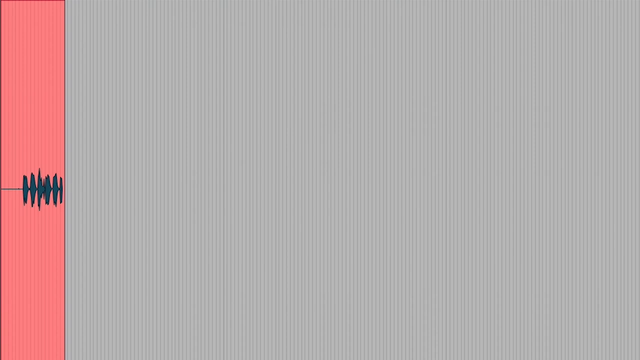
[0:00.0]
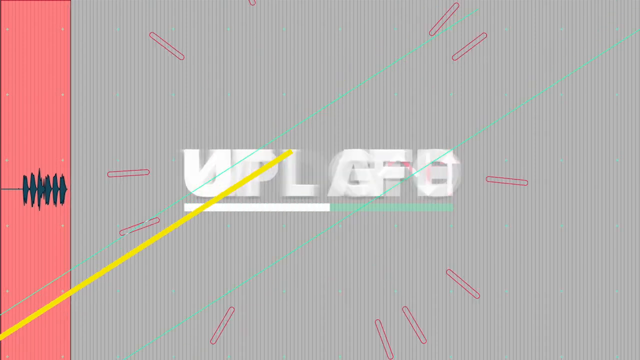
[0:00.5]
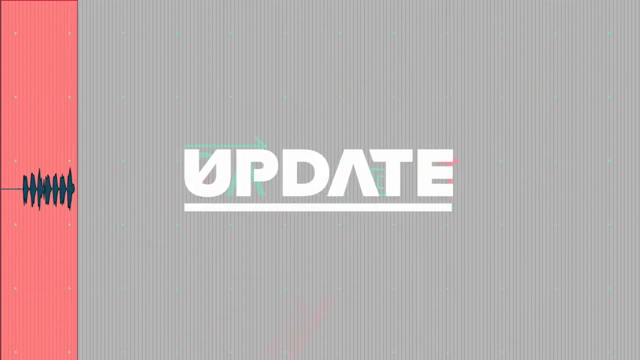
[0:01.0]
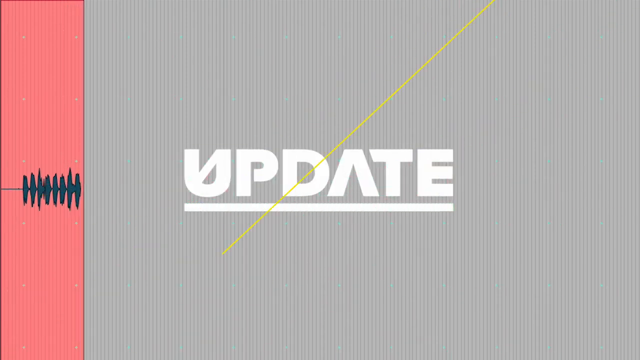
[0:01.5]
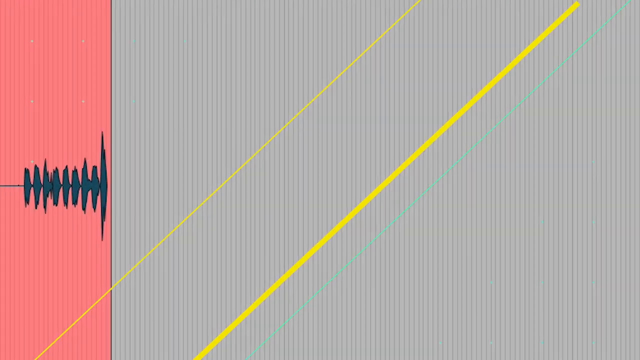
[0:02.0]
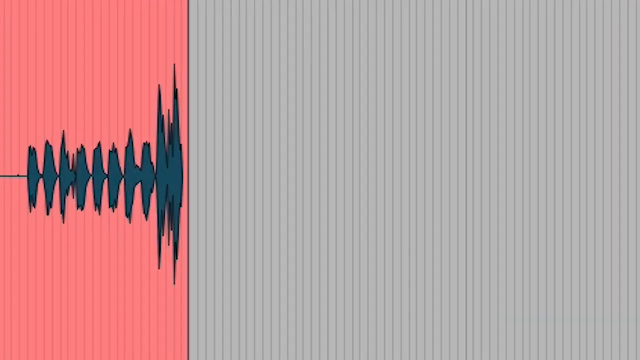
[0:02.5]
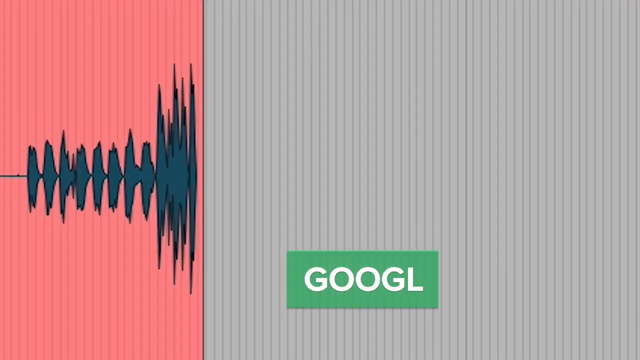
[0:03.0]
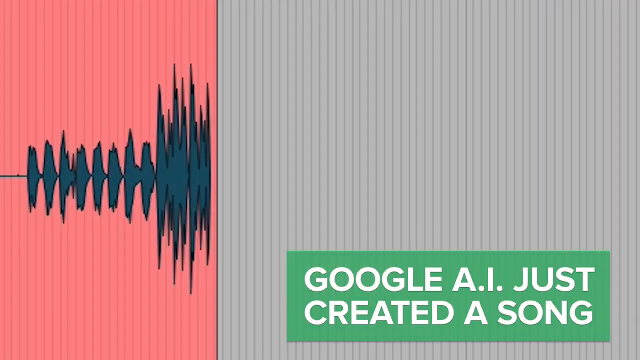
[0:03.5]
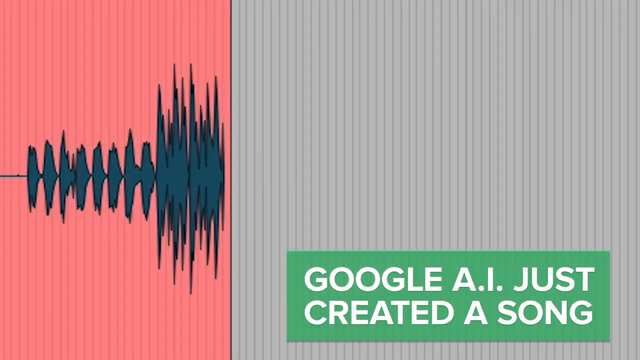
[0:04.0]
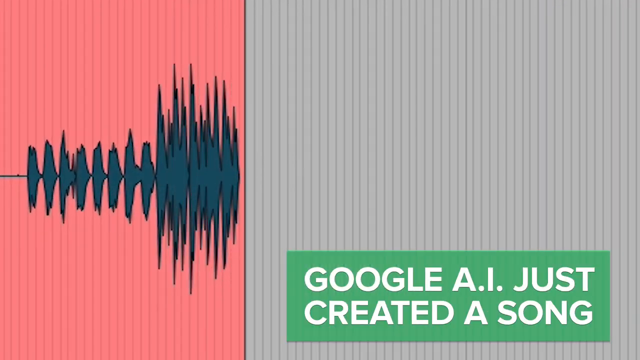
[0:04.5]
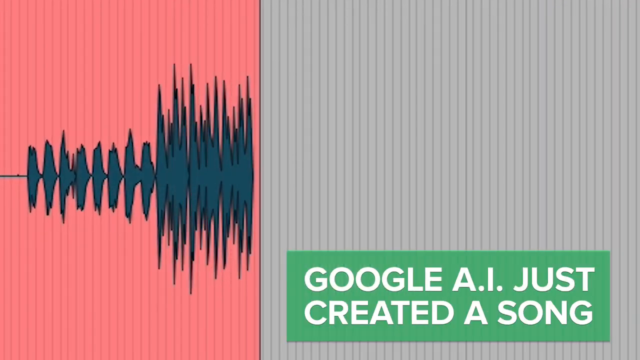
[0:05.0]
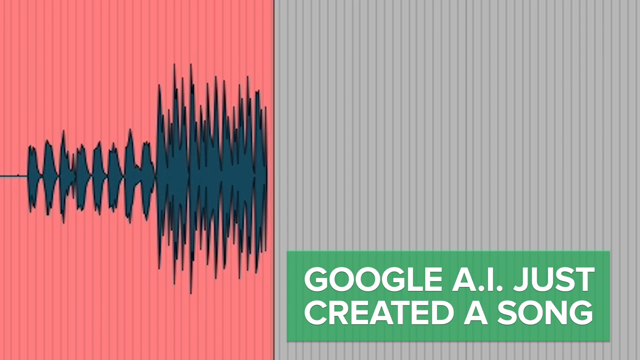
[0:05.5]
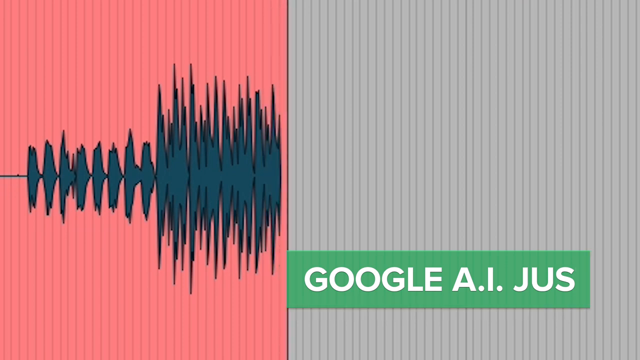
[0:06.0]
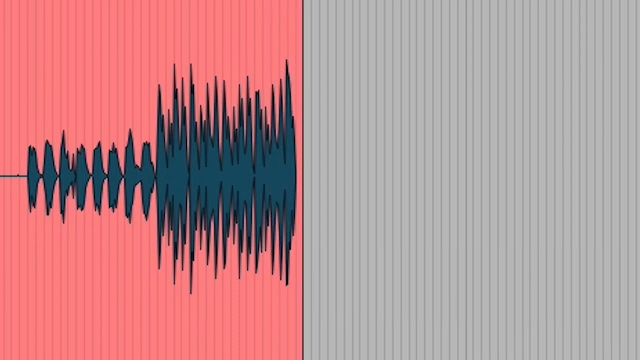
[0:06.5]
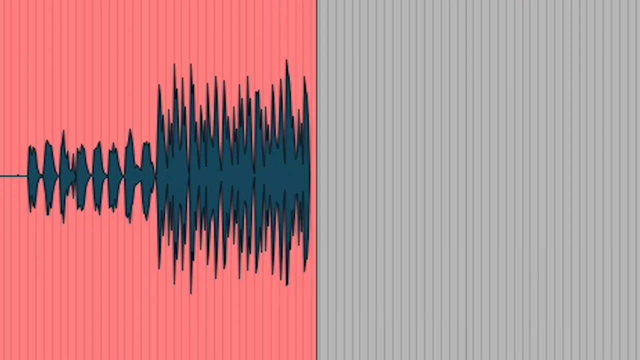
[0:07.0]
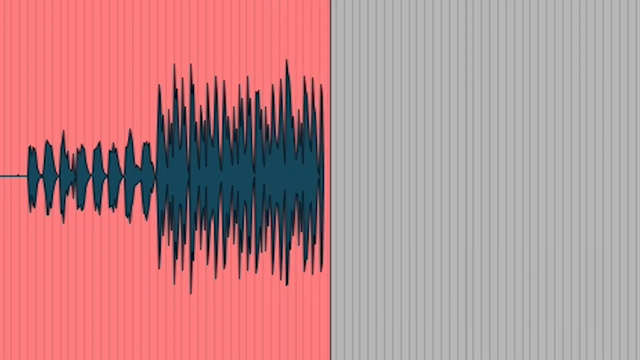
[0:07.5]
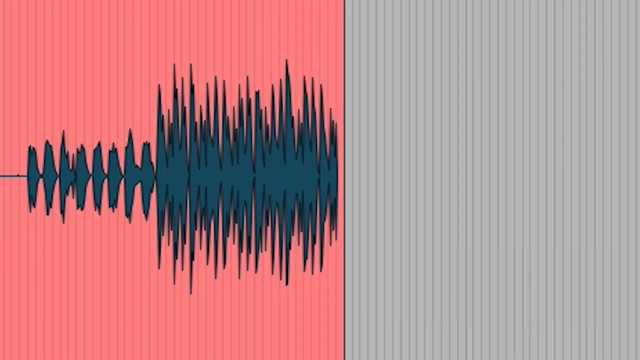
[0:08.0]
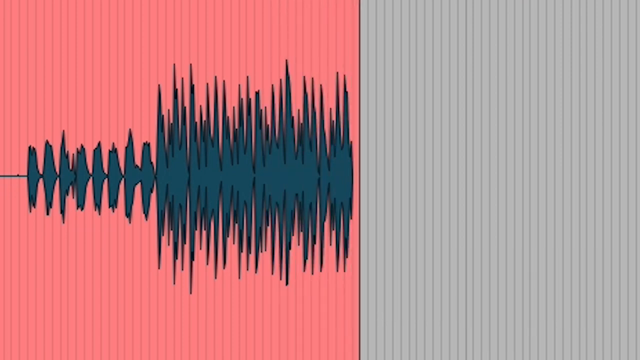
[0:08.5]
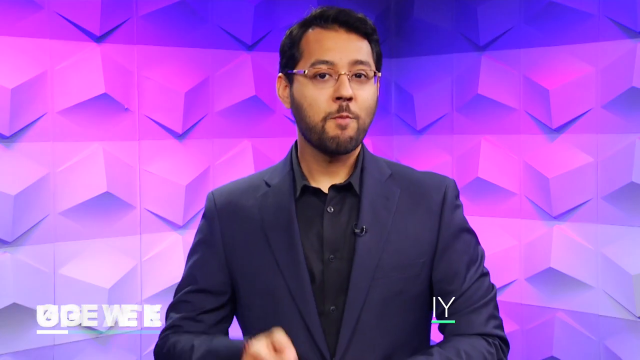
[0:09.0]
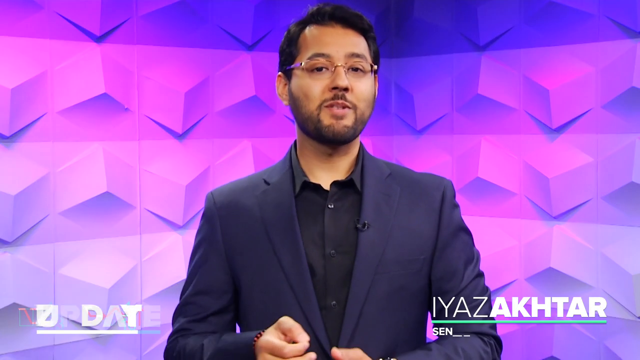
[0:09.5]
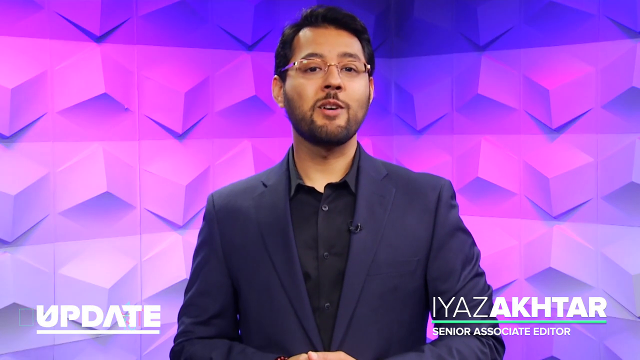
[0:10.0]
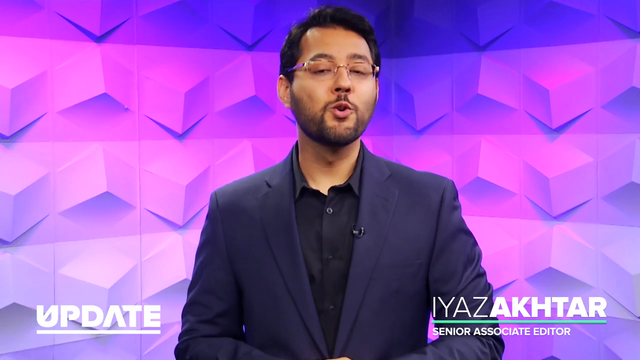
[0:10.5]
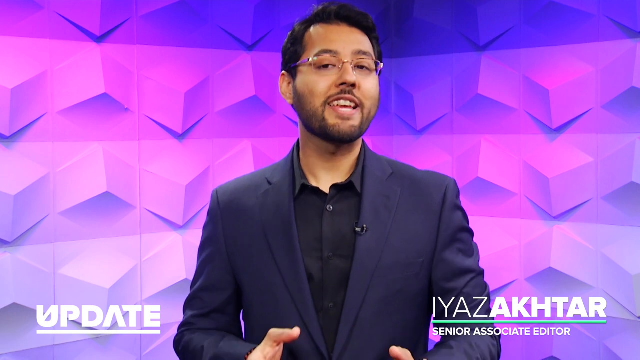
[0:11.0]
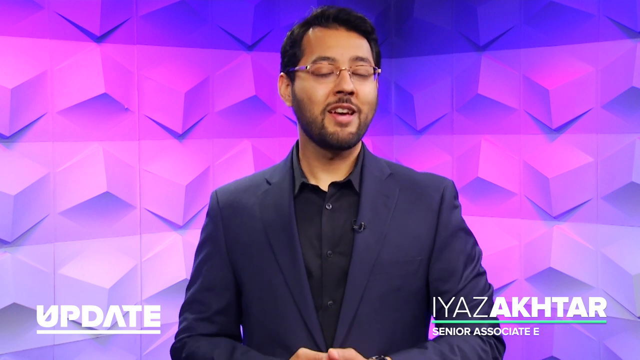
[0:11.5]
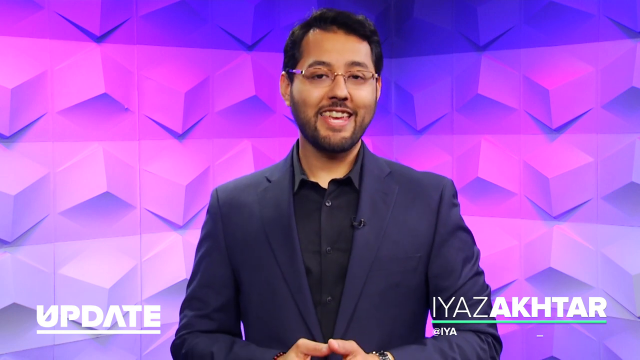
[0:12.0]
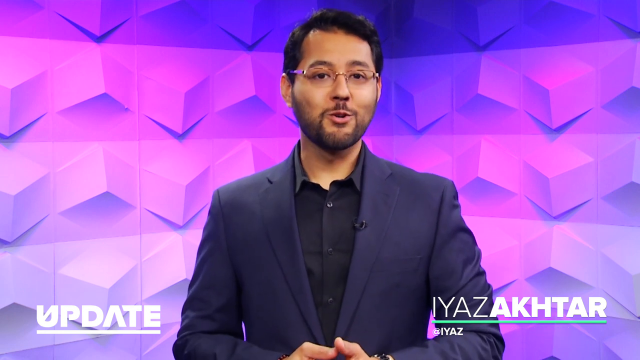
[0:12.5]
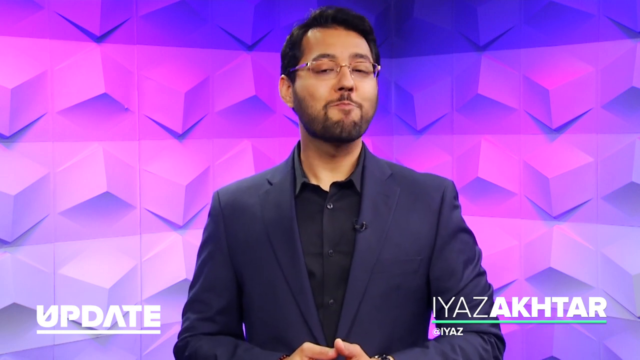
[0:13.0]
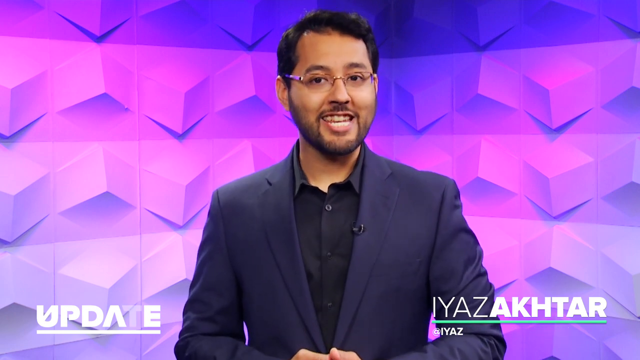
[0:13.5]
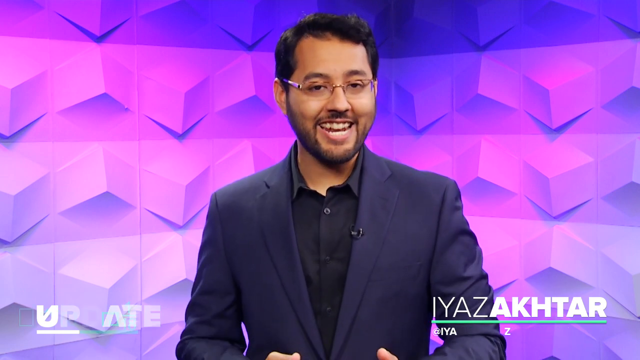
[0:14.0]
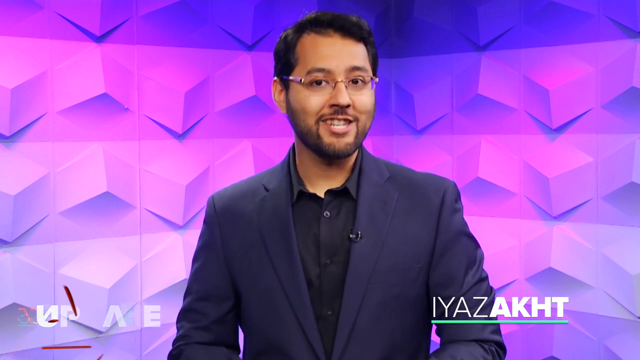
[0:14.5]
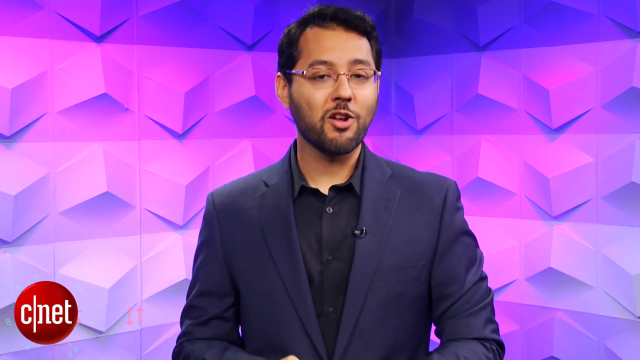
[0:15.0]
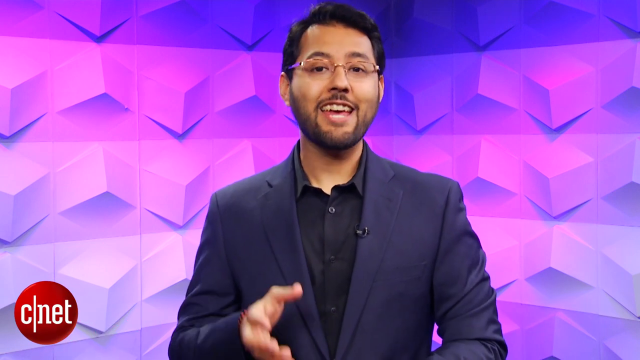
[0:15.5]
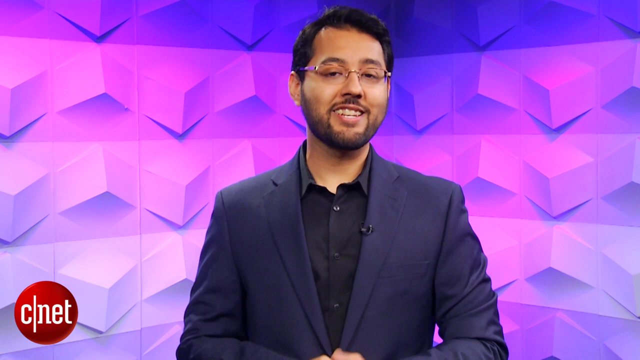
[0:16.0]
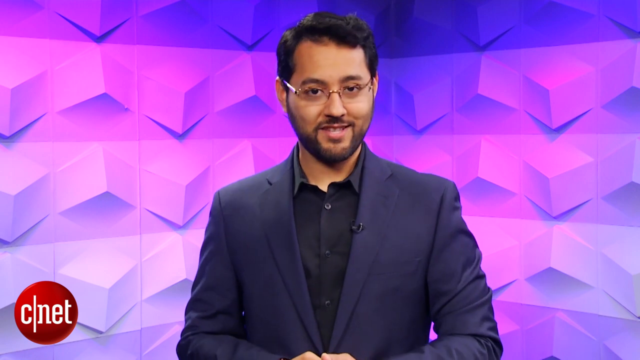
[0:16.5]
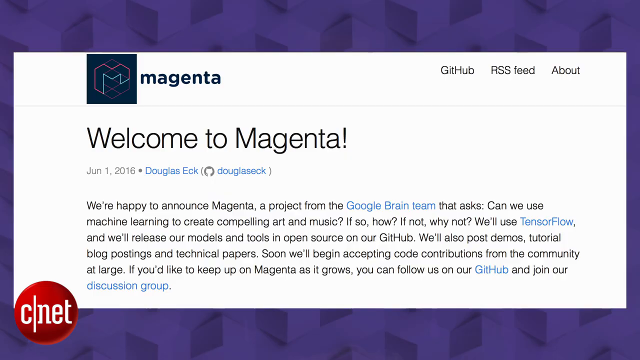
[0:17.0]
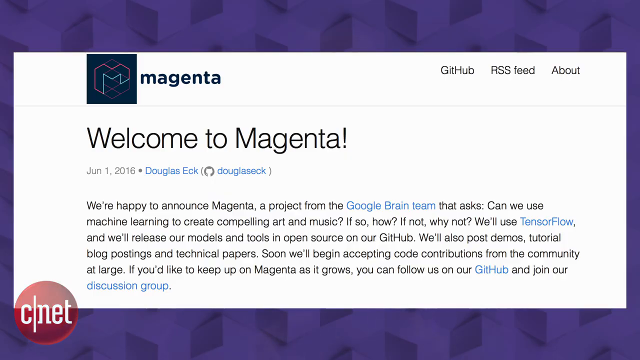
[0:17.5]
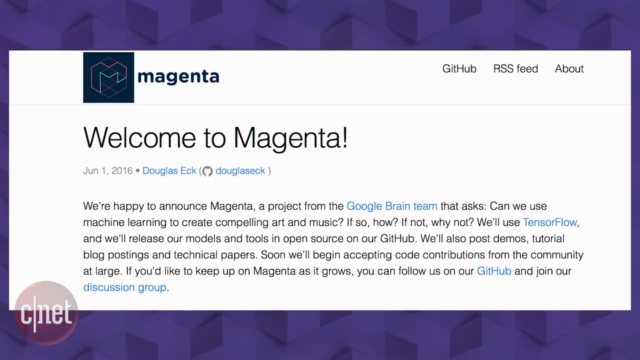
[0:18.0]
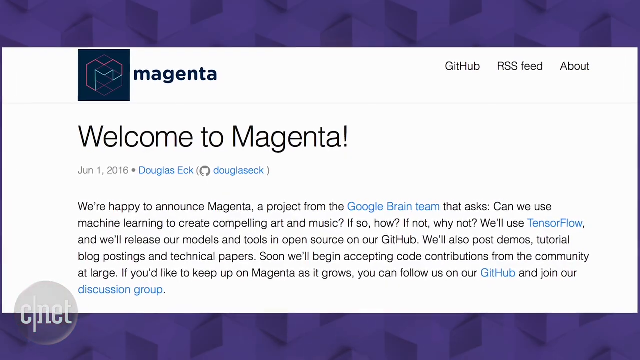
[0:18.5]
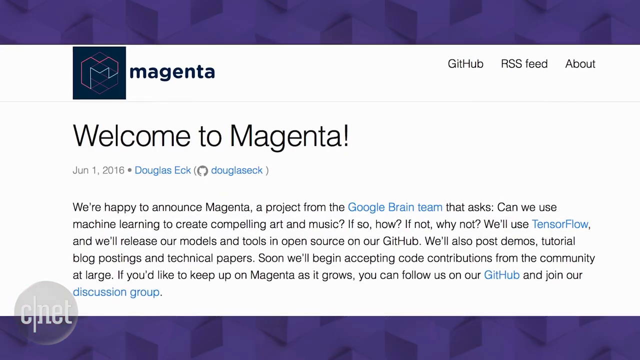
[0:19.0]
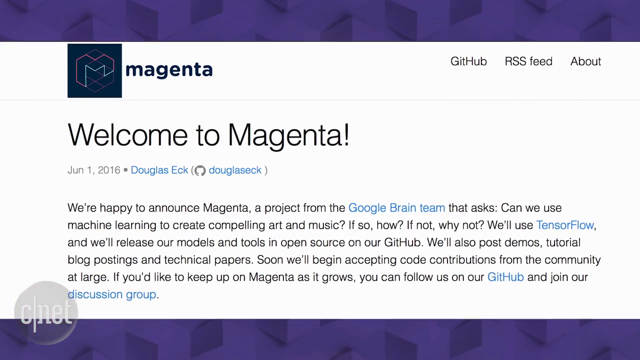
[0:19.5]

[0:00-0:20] The word "update" appears, then colored lines move diagonally and the lines in the word "update" disappear. The background is red and gray; the red side carries a kind of sound wave, and the gray side slowly disappears as the red side grows. Text on a green background then indicates that Google AI has just created a song and that the song was made by AI. An anchor appears, a man named Ilya Saktar, who probably works for the Update site, which covers the news. The site's logo appears in the bottom left of the screen. After the anchor appears and starts talking, the news is shown.